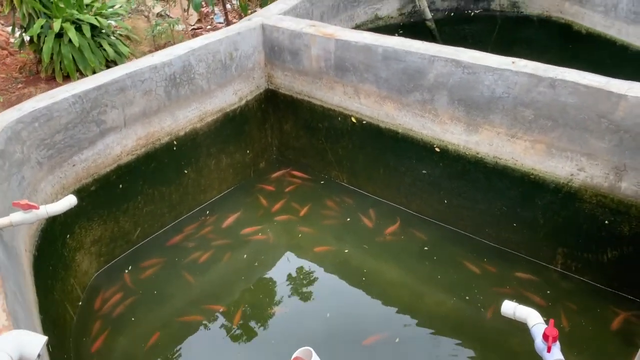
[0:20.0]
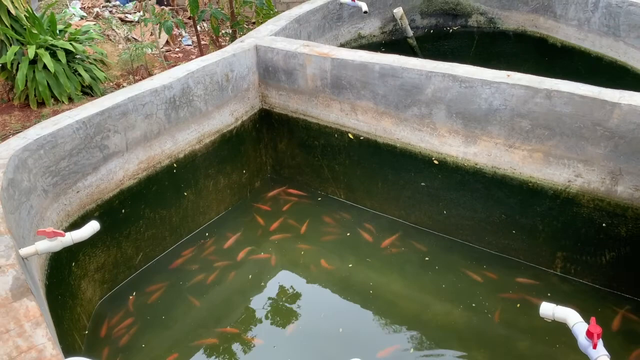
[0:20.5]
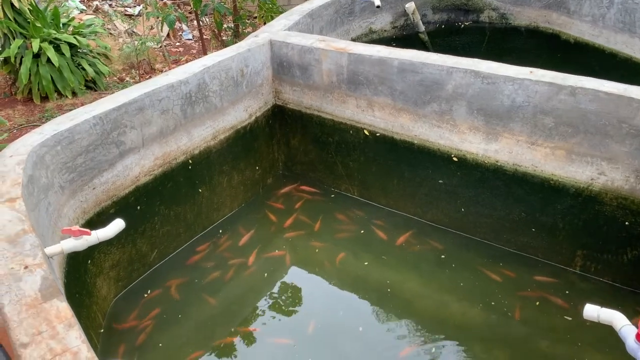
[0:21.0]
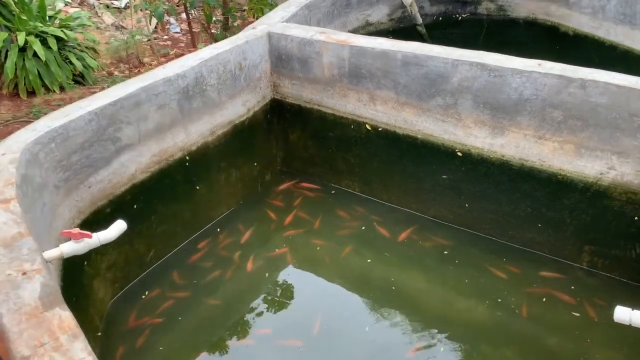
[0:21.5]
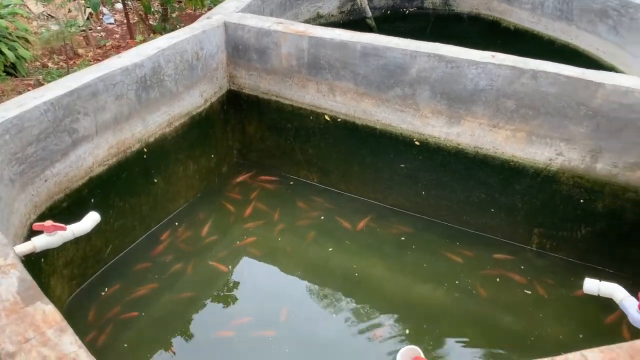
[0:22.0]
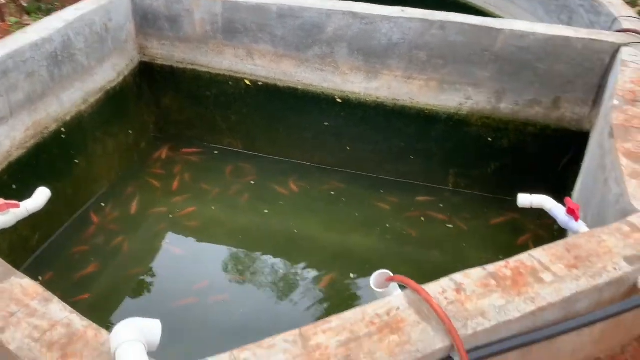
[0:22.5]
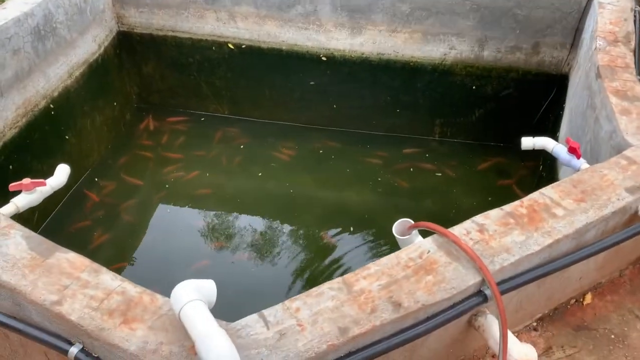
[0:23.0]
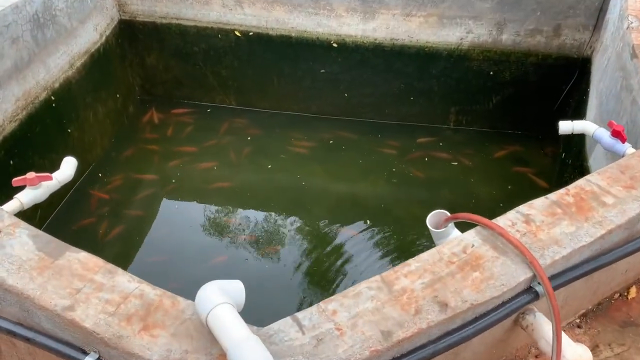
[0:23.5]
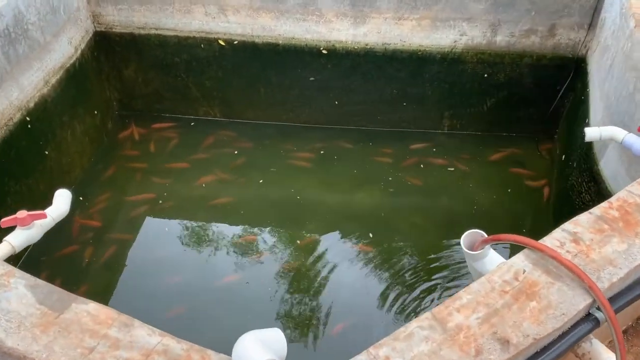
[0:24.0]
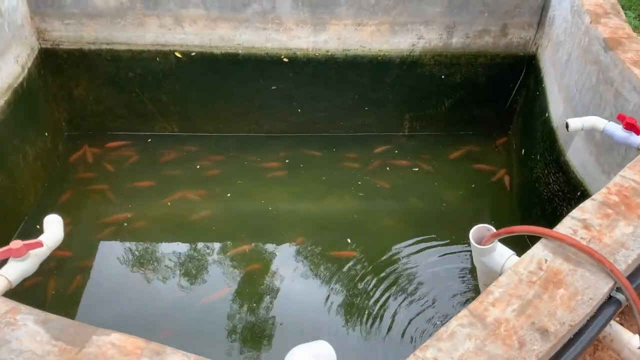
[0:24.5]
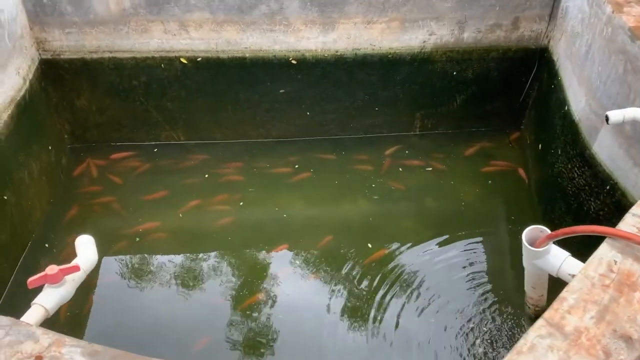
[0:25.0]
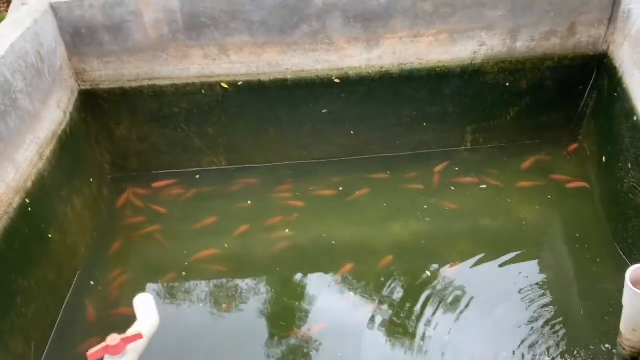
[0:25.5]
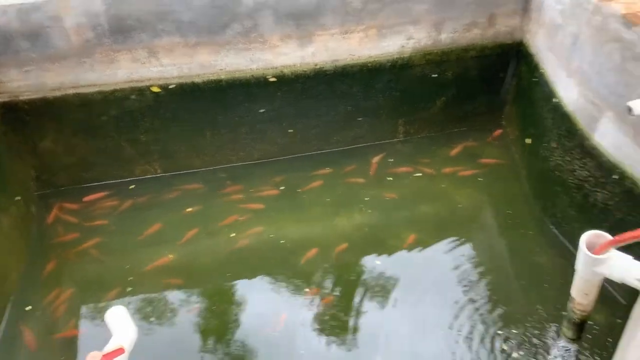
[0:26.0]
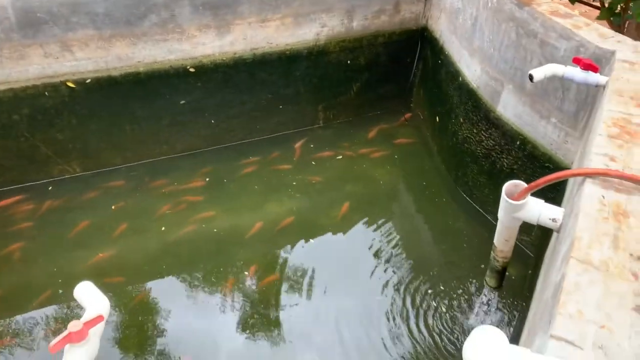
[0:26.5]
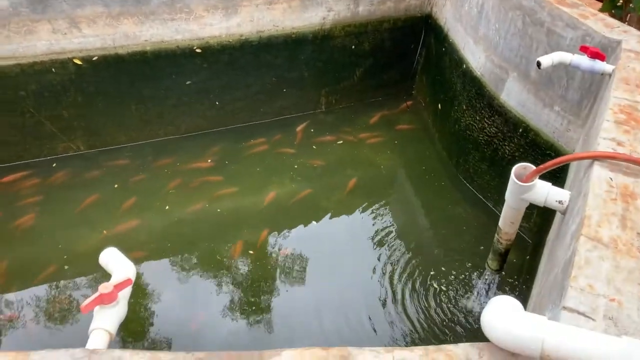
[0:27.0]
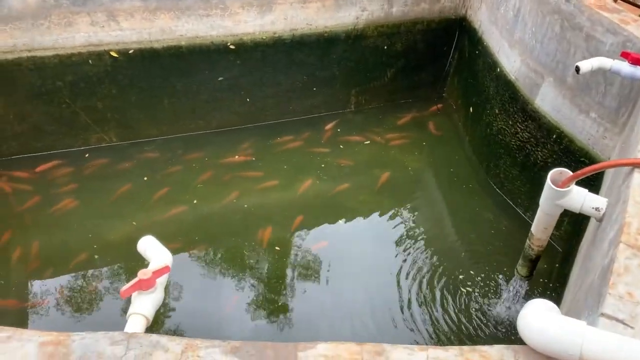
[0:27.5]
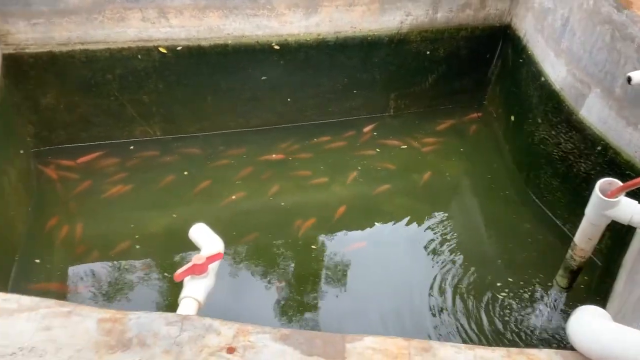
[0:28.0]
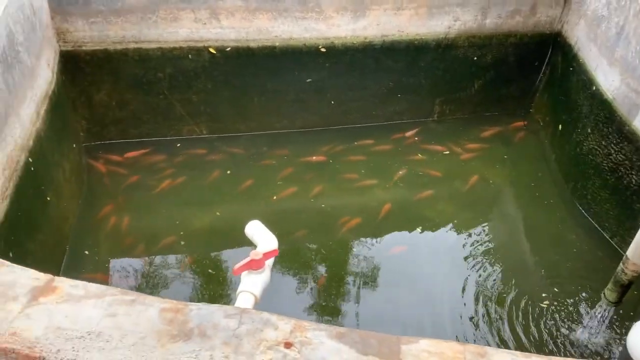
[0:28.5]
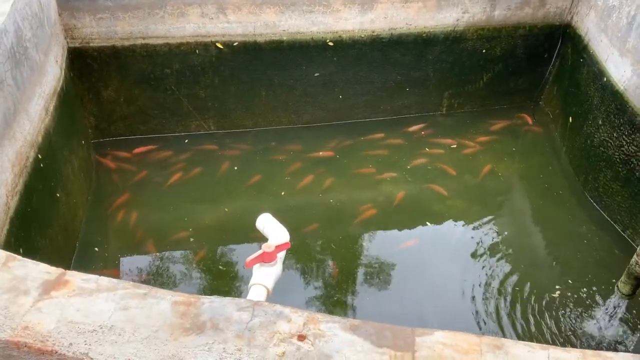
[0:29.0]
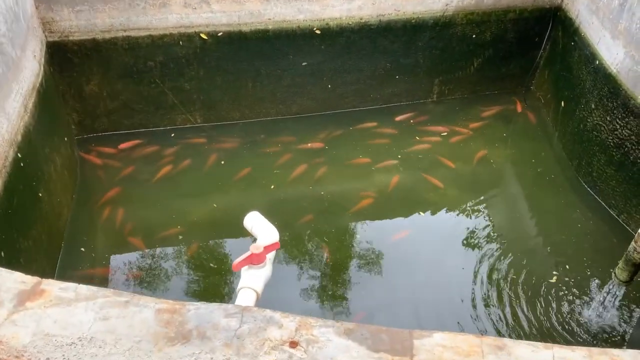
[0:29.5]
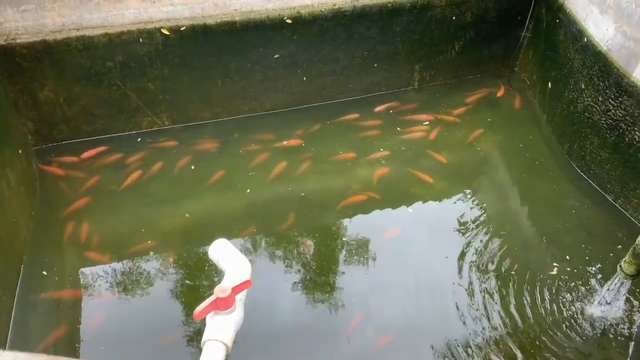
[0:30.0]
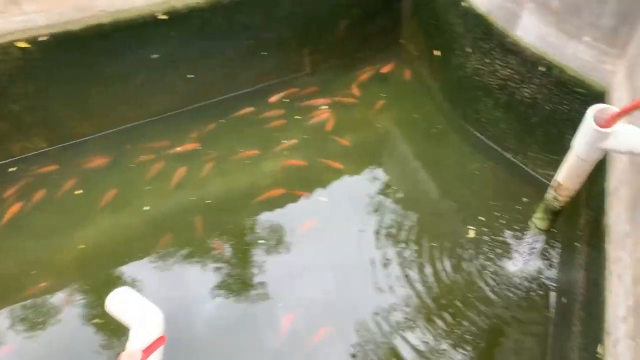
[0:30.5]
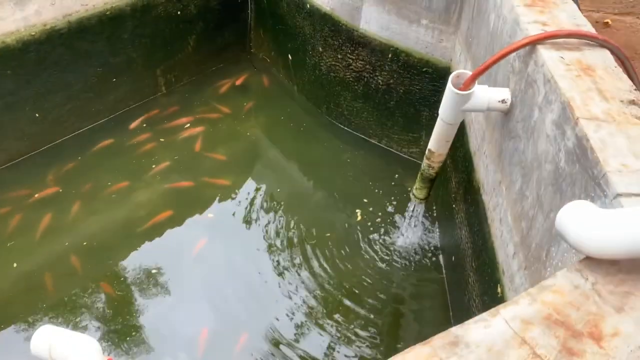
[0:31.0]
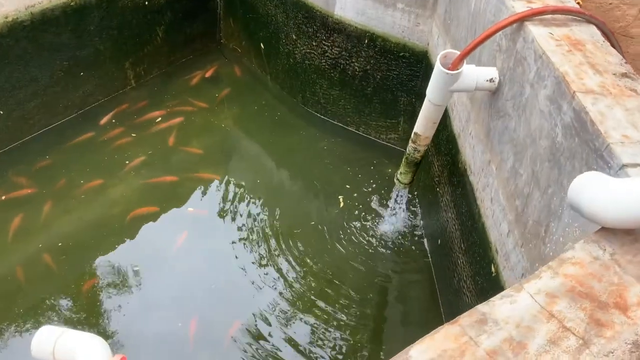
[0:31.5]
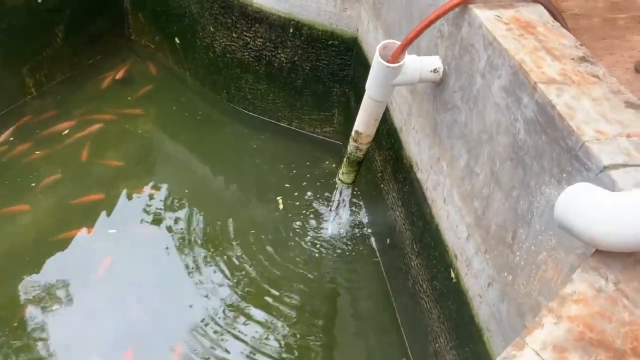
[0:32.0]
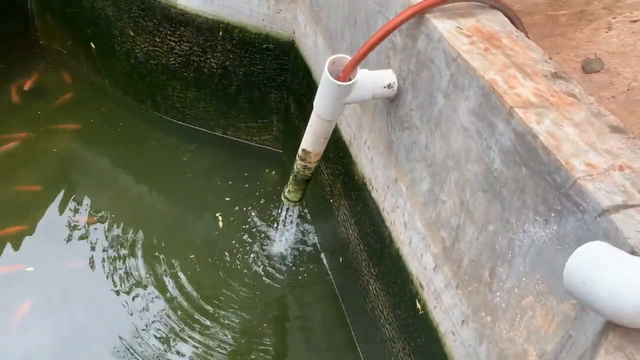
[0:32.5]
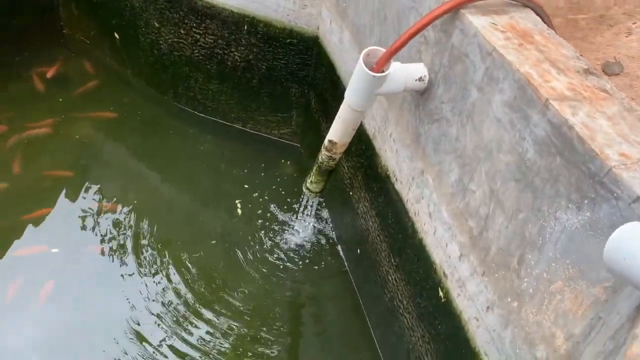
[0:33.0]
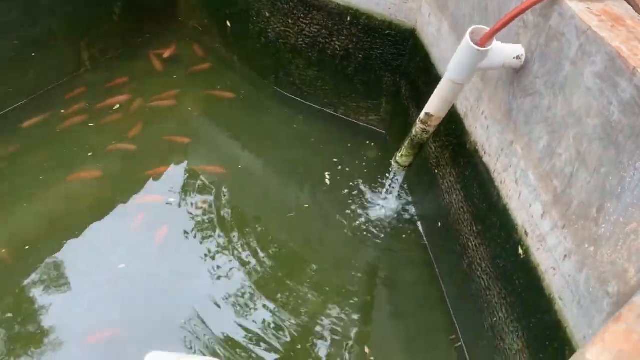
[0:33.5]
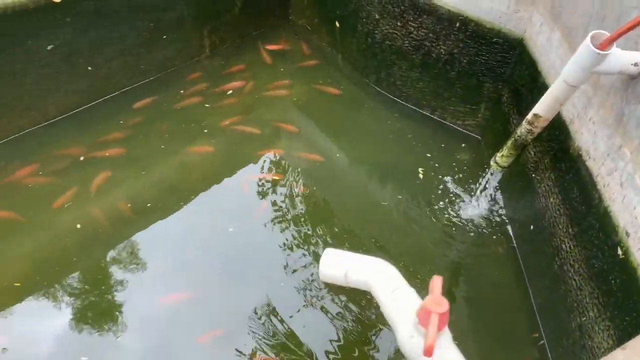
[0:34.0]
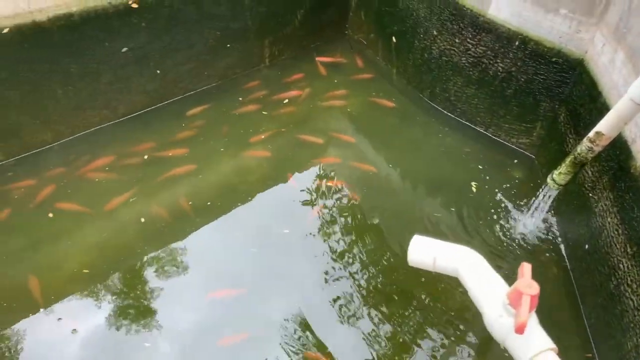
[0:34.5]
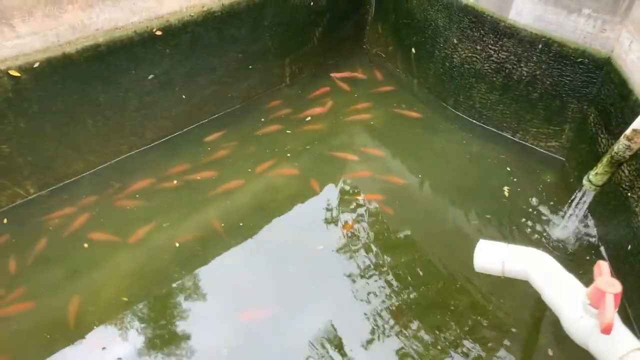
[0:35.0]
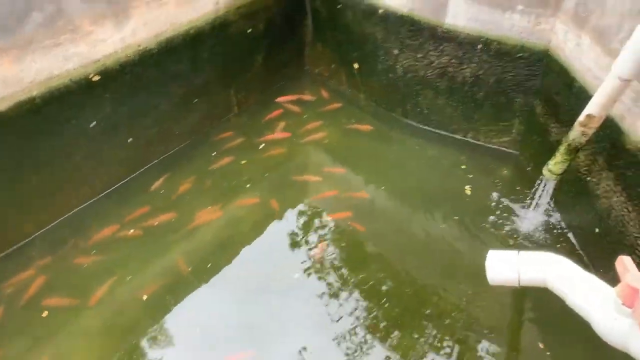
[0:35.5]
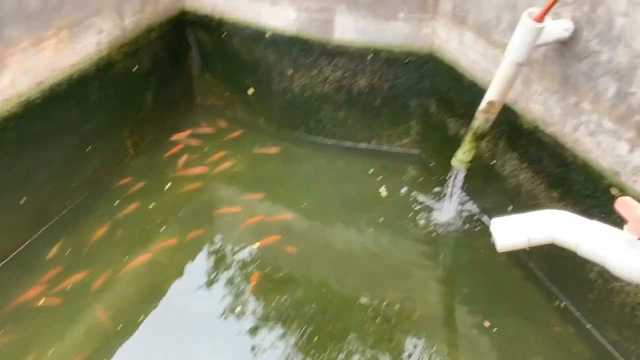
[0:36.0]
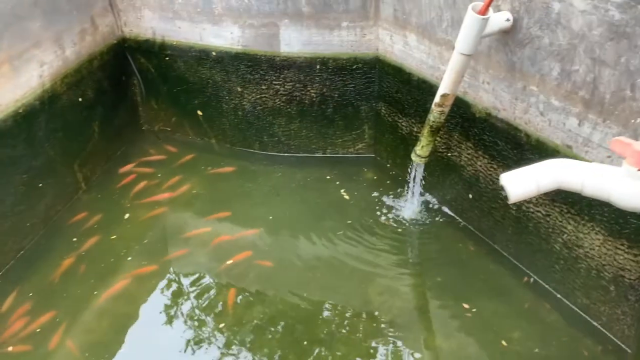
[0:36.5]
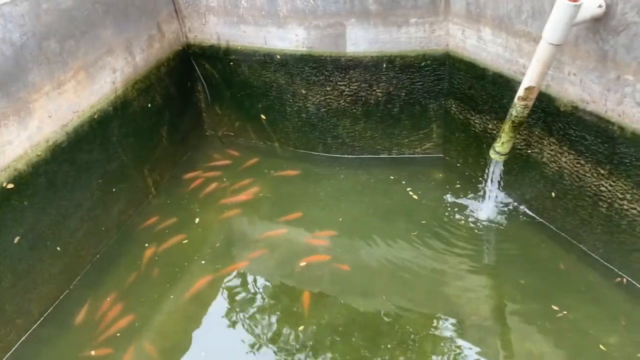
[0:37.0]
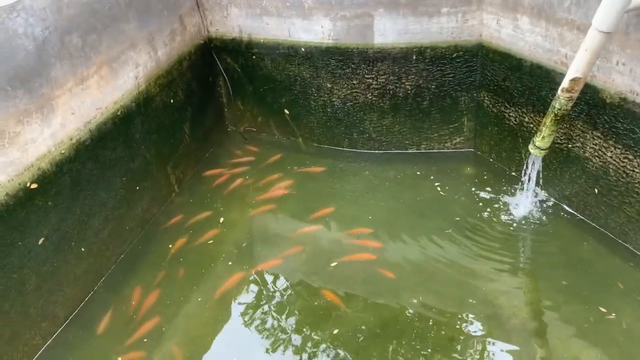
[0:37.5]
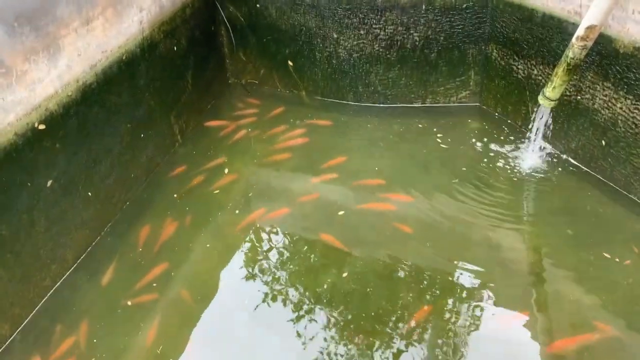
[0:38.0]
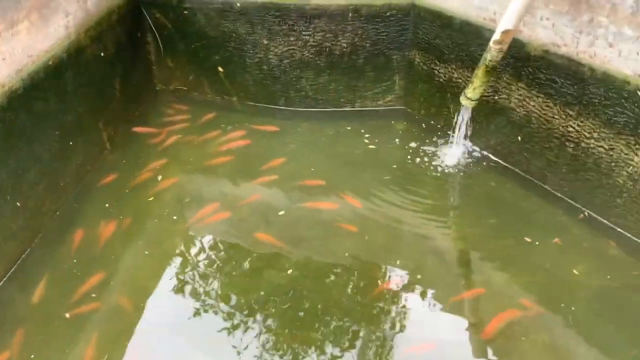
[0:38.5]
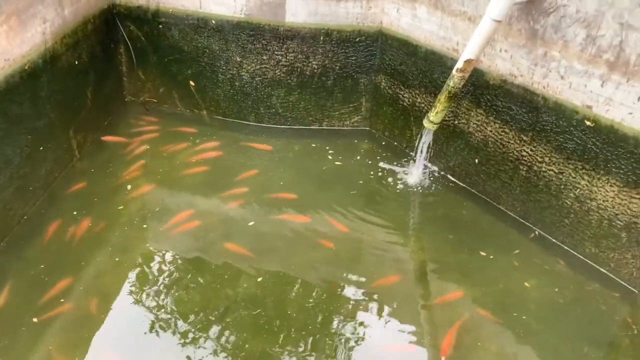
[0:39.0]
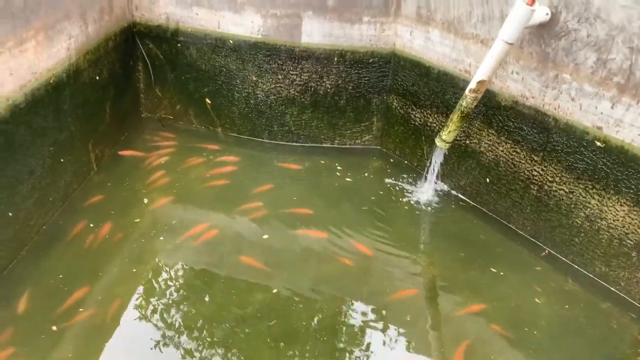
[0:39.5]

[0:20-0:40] Green vegetation is visible just off the top left side. In the center is a cement-gray square, rounded section, with white pipes hanging out over the water, and a tiny orange fish can be seen. There is orange tubing on the right side, and on the outer edge of the cement square wall there is a black pipe, probably feeding water into the hanging white pipes. An orange pipe feeds through one white pipe, pouring water into the tank. There seem to be about four white pipes; two of them, one on the left and one on the right, have red flat handles for turning the water on and off. One white pipe is mounted into the cement wall.